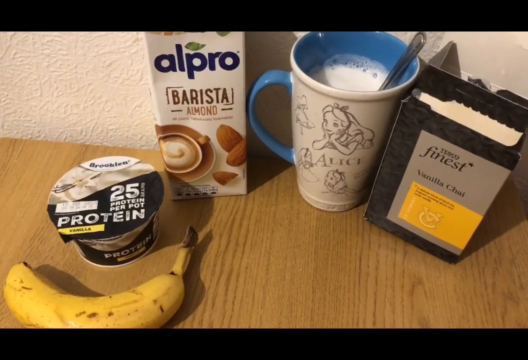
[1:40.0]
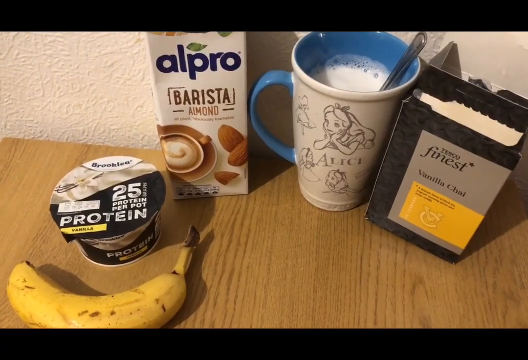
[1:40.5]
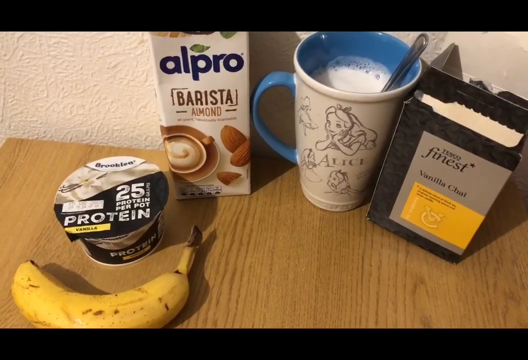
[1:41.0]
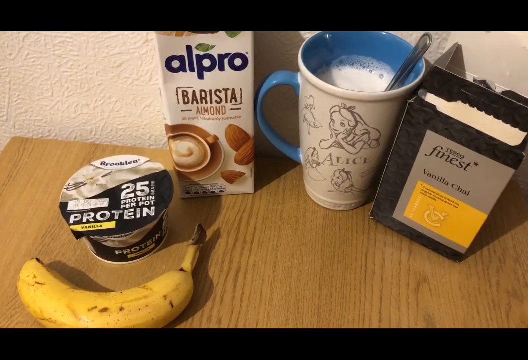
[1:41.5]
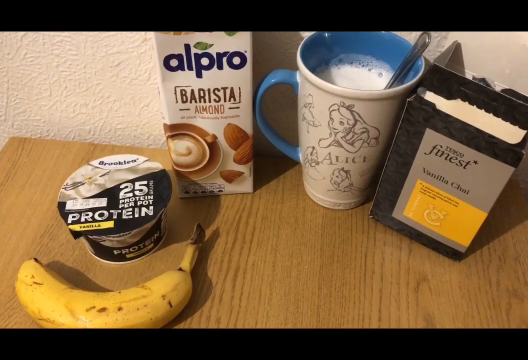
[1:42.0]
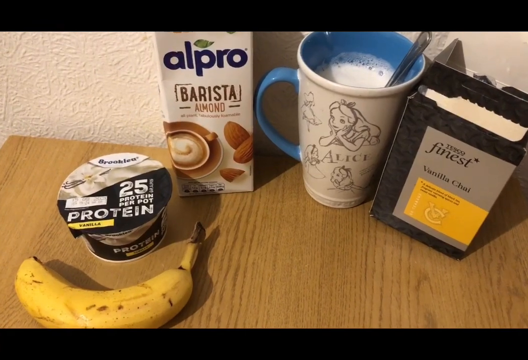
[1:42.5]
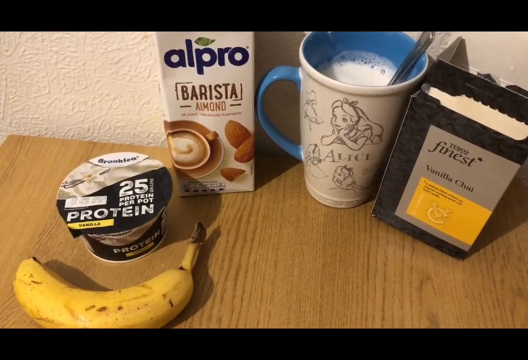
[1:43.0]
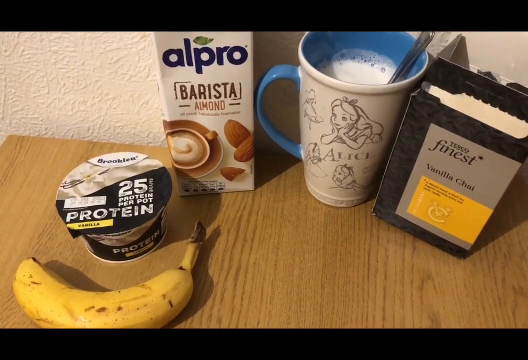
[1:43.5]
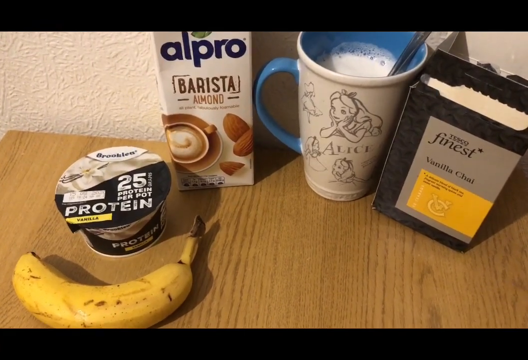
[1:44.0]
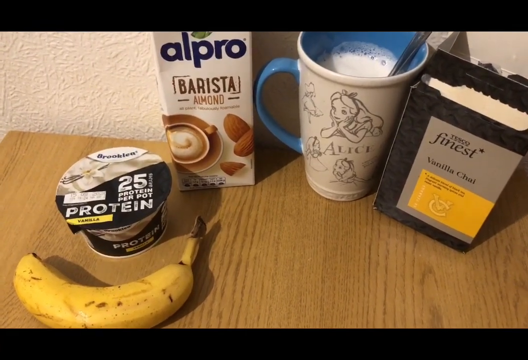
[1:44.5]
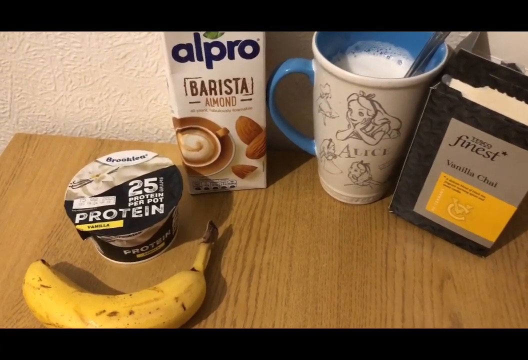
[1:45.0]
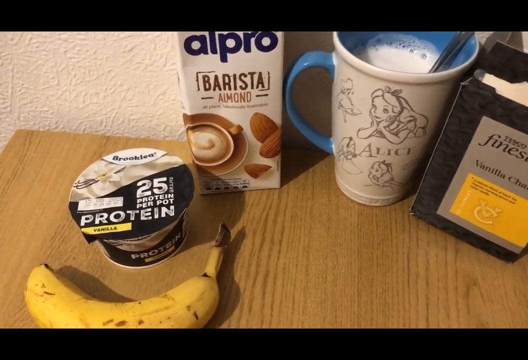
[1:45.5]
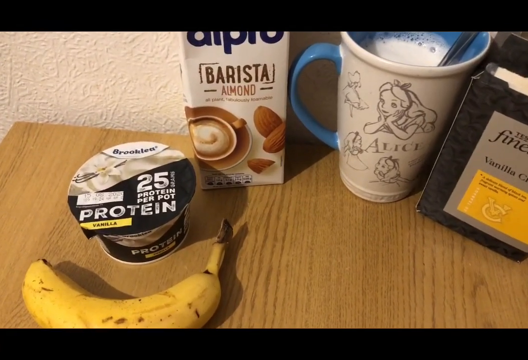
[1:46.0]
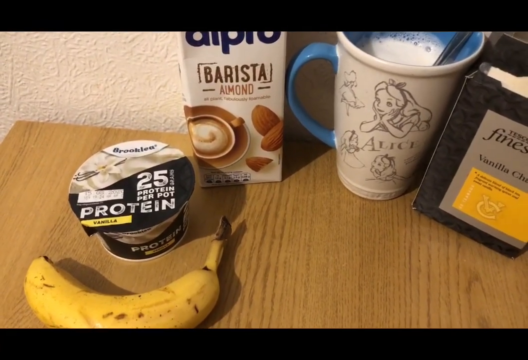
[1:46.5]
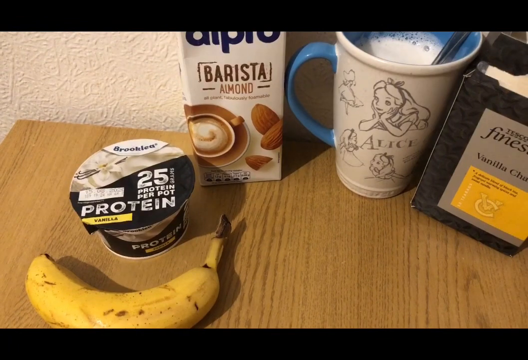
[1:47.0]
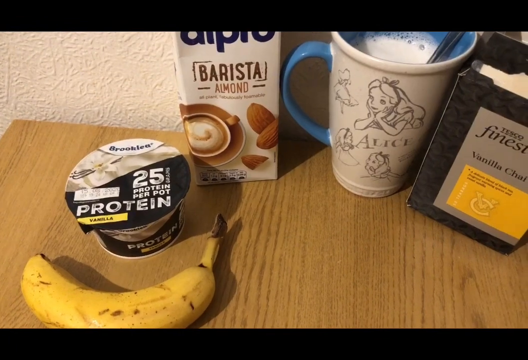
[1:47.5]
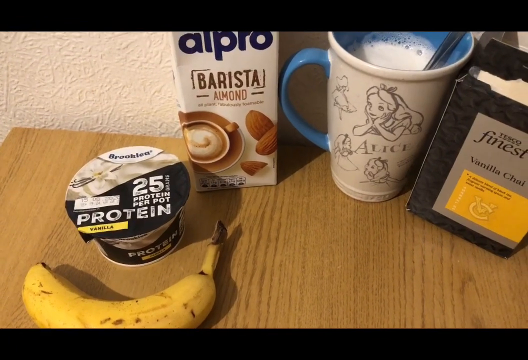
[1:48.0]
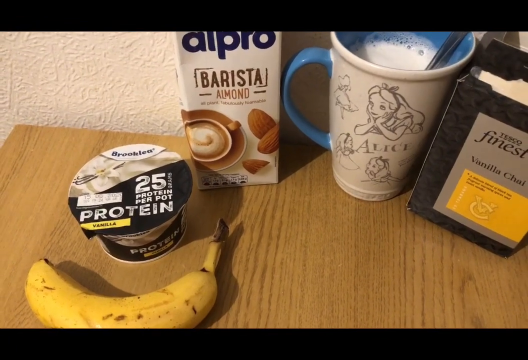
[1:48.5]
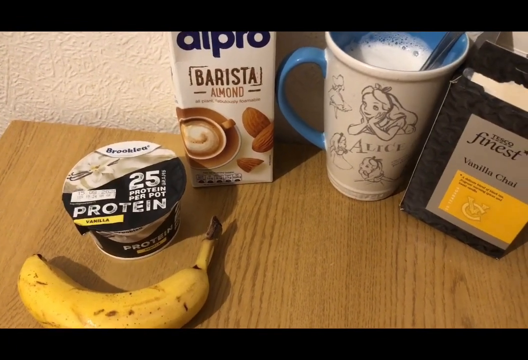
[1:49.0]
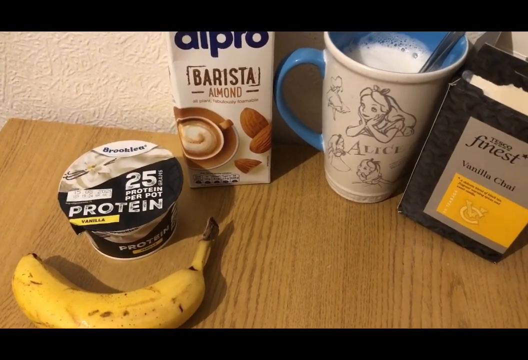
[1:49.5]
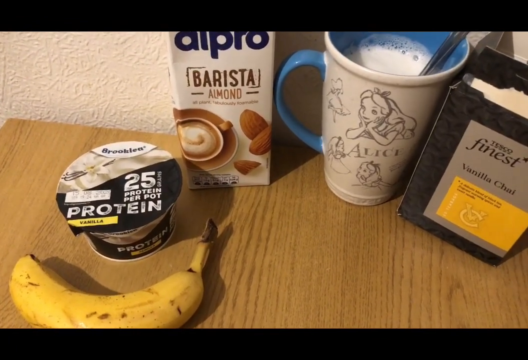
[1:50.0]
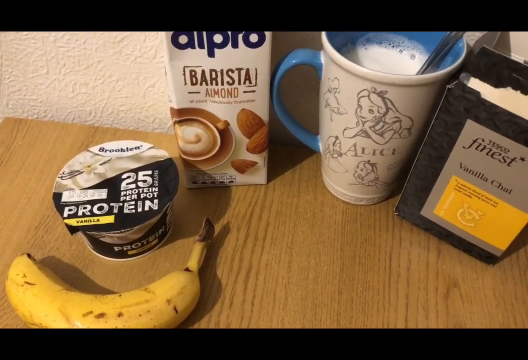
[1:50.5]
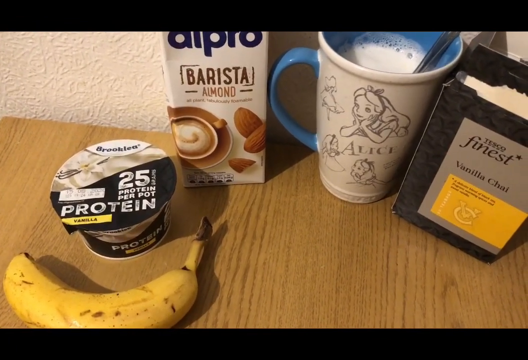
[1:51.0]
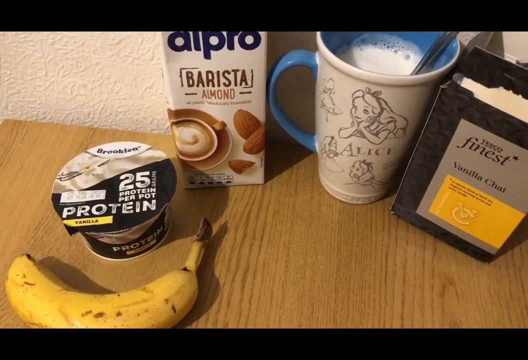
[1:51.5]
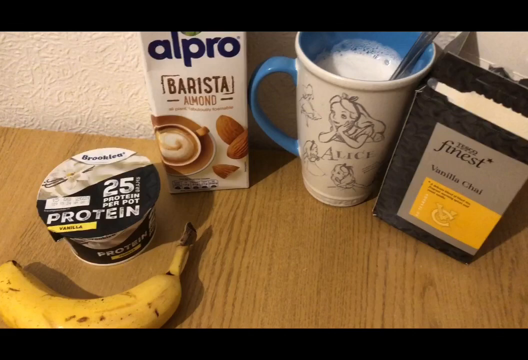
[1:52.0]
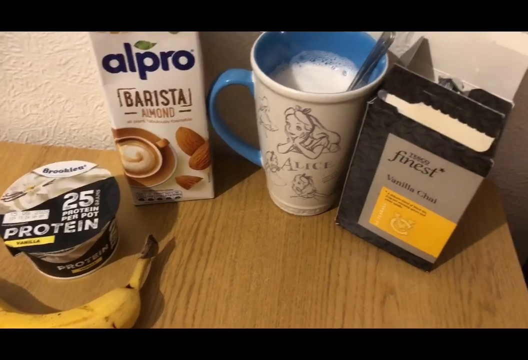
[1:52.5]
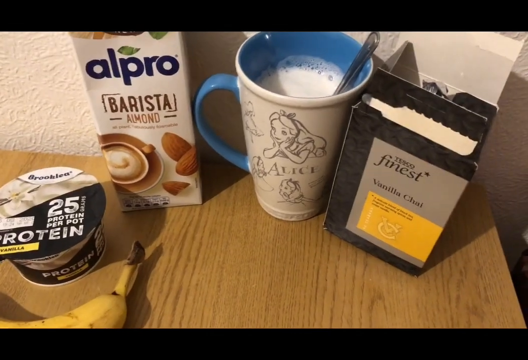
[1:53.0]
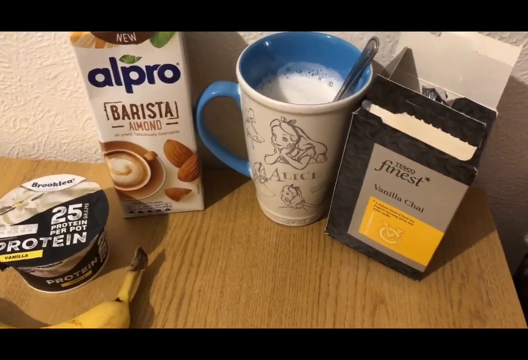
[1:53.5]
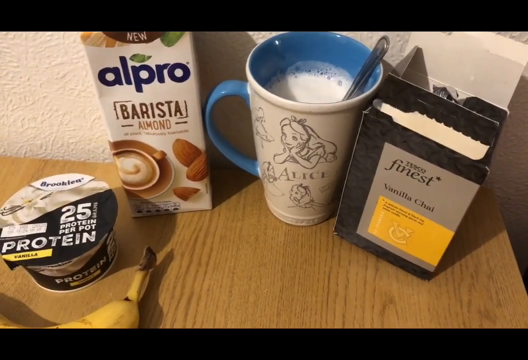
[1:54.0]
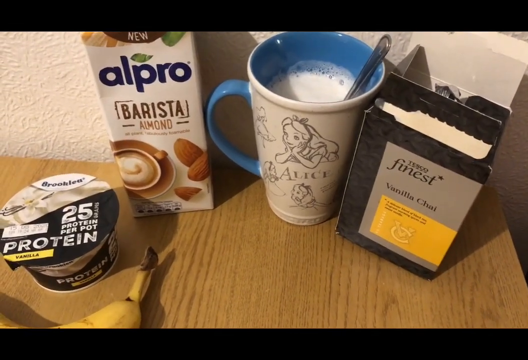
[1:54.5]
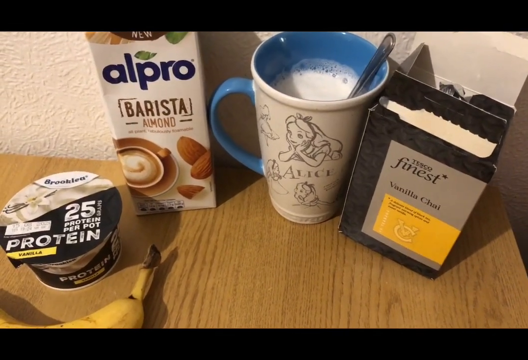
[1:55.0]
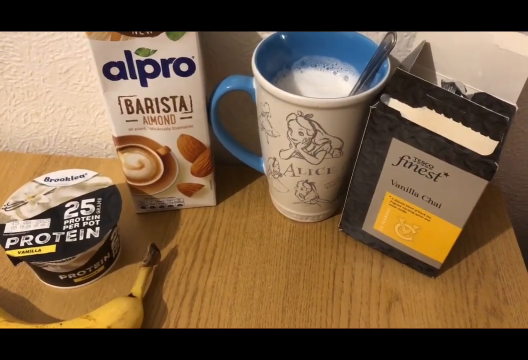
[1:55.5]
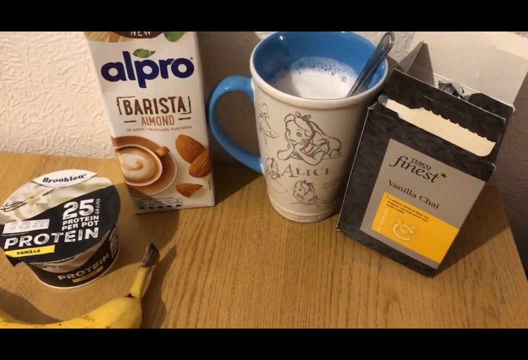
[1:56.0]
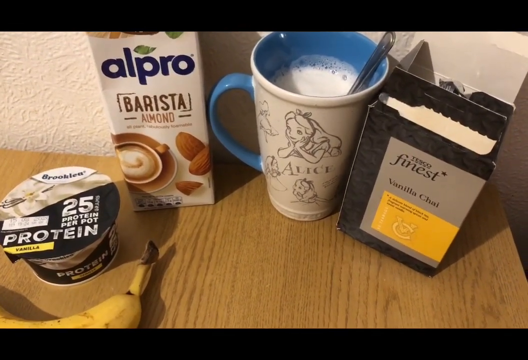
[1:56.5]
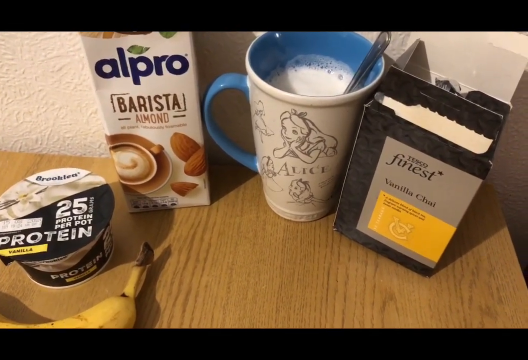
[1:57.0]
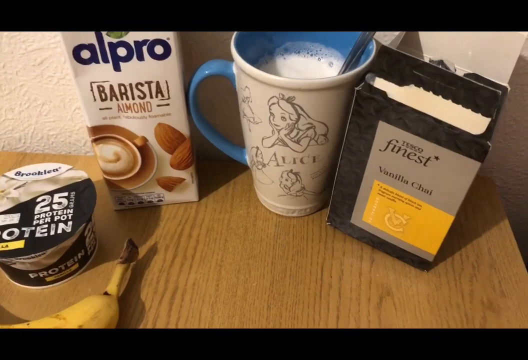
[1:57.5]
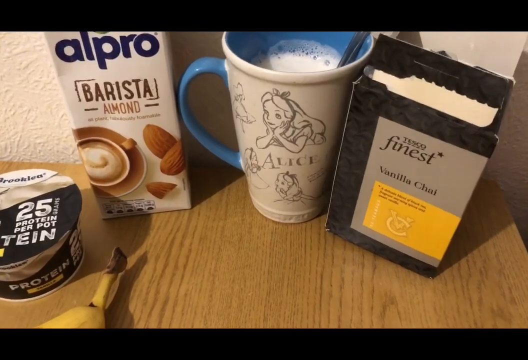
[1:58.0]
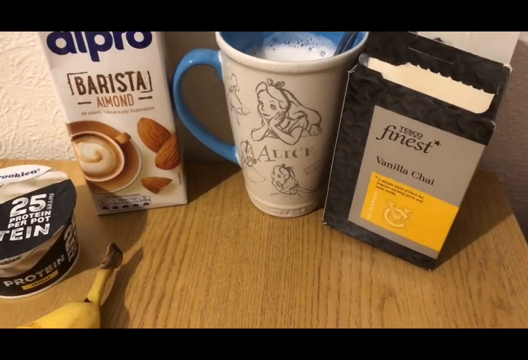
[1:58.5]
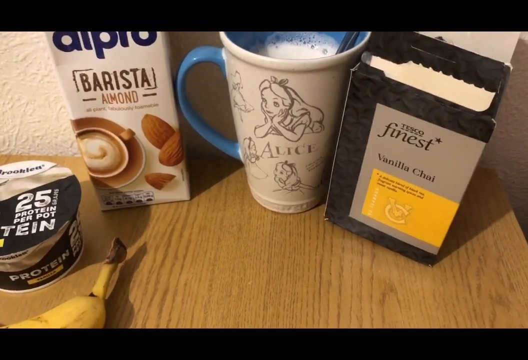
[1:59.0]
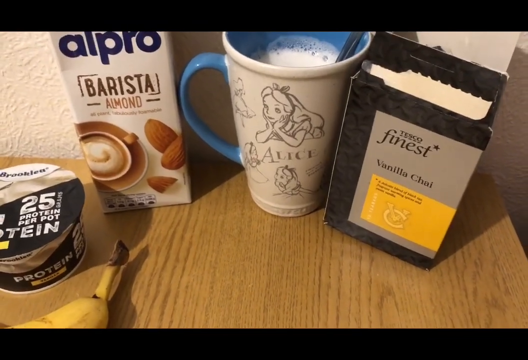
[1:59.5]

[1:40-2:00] The top of a light brown wooden table is shown. On the right is a small black box with a gray rectangle on the front where black text says "finest vanilla chai," and a yellow rectangular box with some text inside it. To the left of the box is a tall cream-colored mug with a blue interior and blue handle, with brown outlined images of Alice in Wonderland characters on the front; it is filled about three quarters of the way with a thick white liquid, and a silver spoon rests inside on the side. To the left of that is a box of Alpro Barista Almond Milk with pictures of almonds and something like a cup of coffee on the front. To the left of that is a small cup of Brooklea yogurt whose lid is roughly half white and half black, saying "25 protein per pot," with a yellow rectangular box that says "vanilla." A yellow banana with its peel on lies on the table in front of the yogurt. Someone seems to be standing in front of the table filming down. The camera zooms in slightly toward the left side near the yogurt and banana, then zooms in a little to the right on the box of vanilla chai tea.